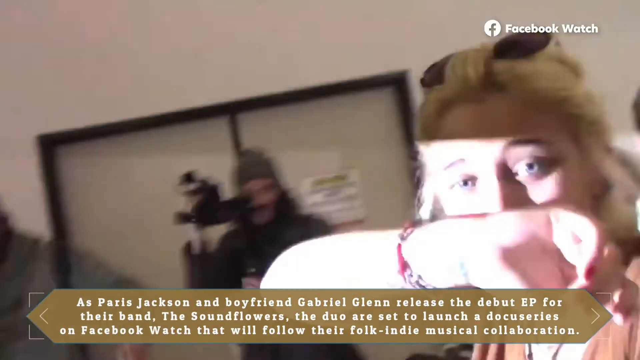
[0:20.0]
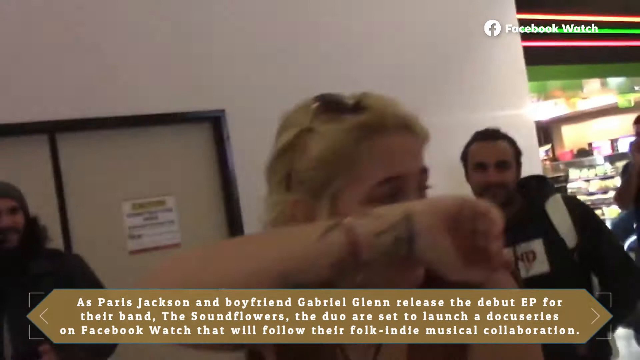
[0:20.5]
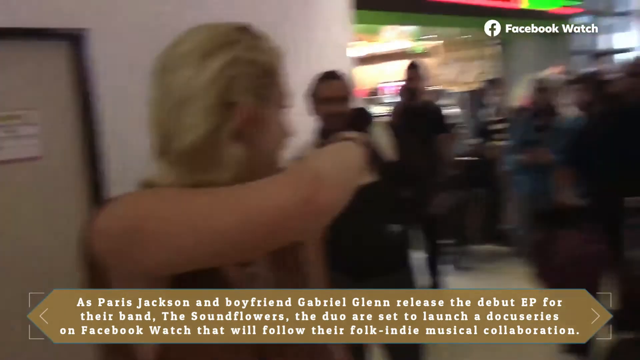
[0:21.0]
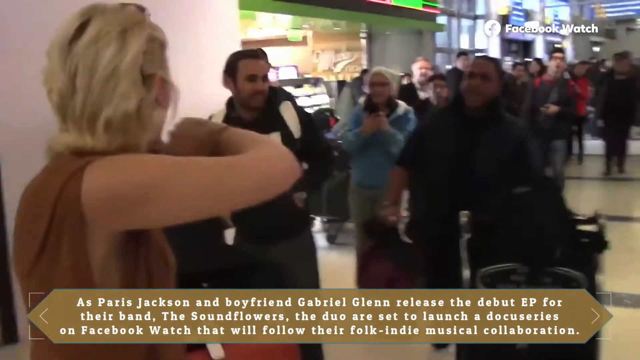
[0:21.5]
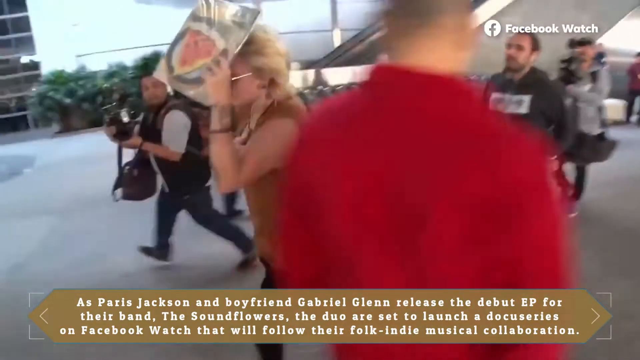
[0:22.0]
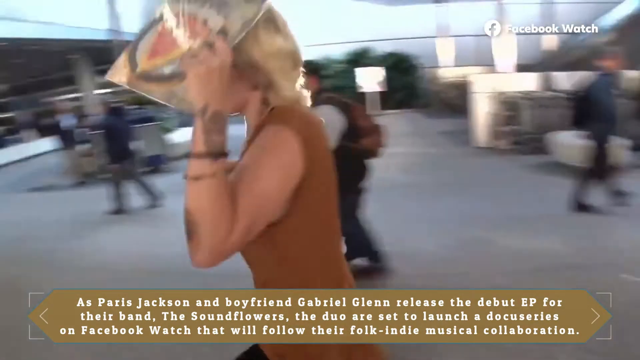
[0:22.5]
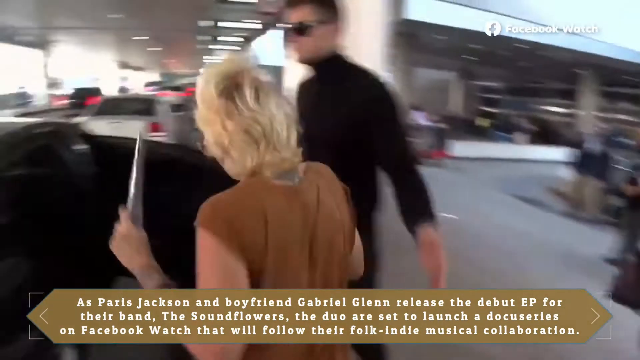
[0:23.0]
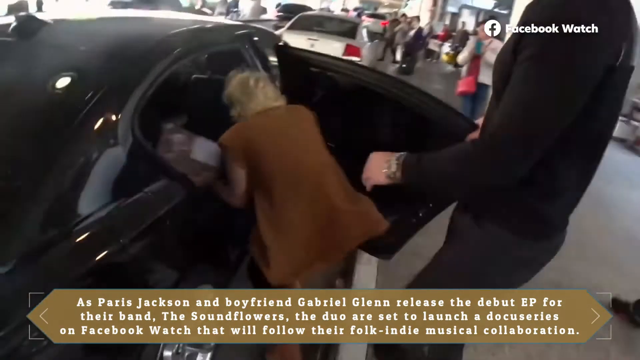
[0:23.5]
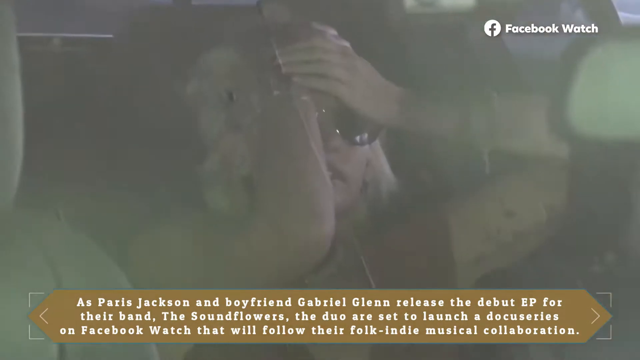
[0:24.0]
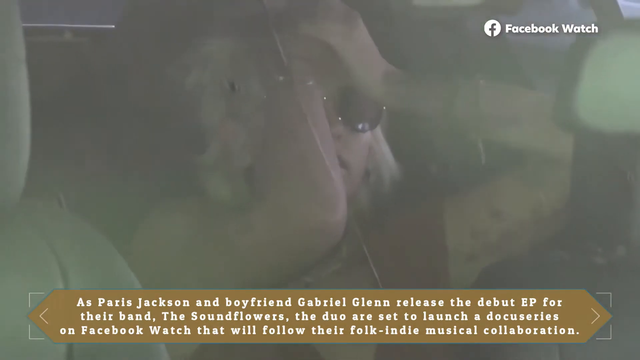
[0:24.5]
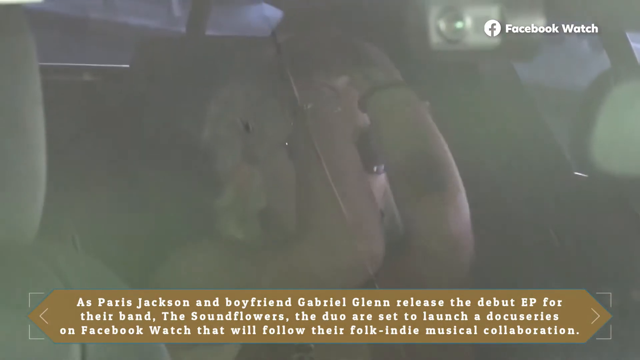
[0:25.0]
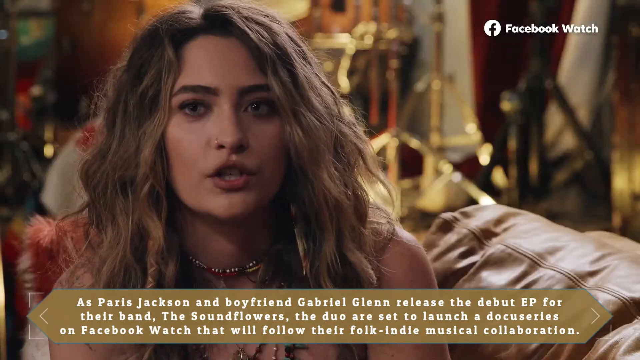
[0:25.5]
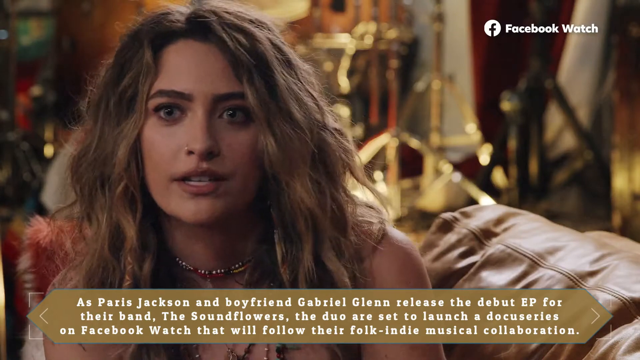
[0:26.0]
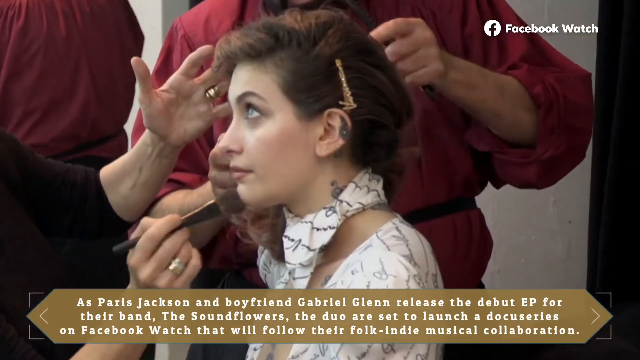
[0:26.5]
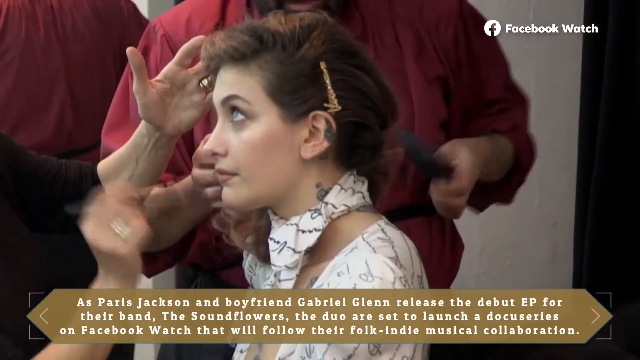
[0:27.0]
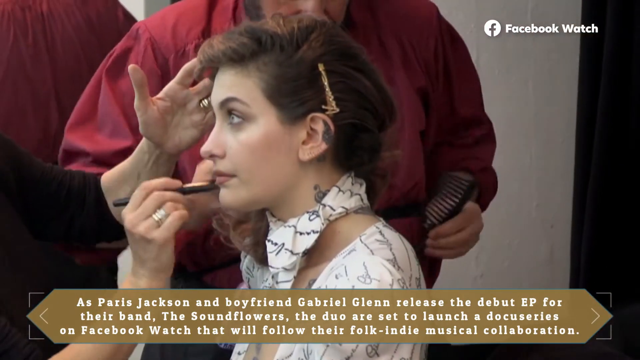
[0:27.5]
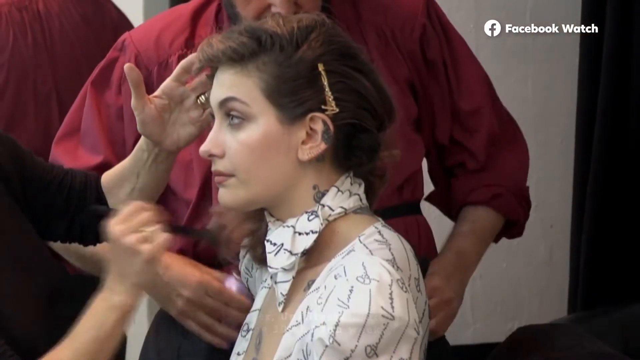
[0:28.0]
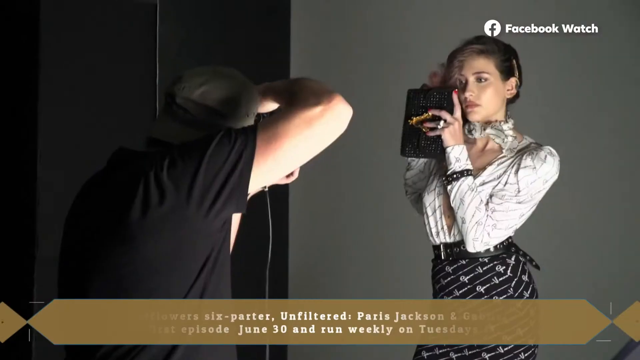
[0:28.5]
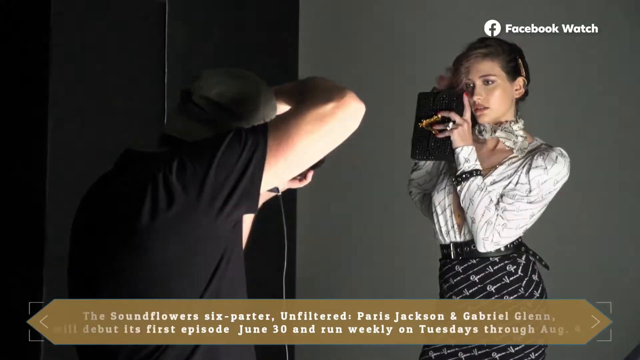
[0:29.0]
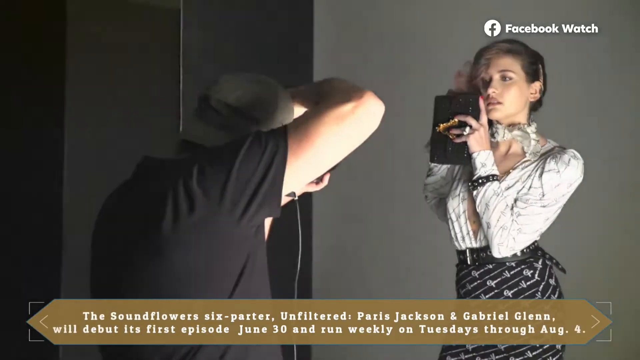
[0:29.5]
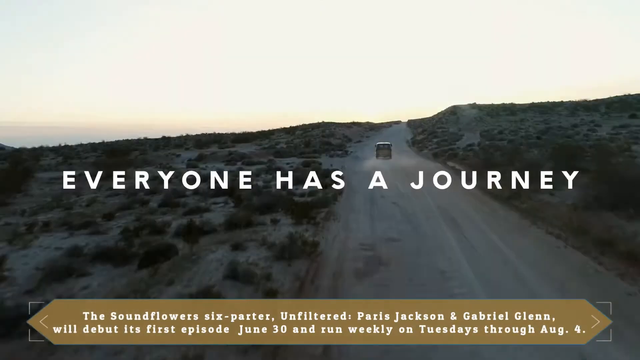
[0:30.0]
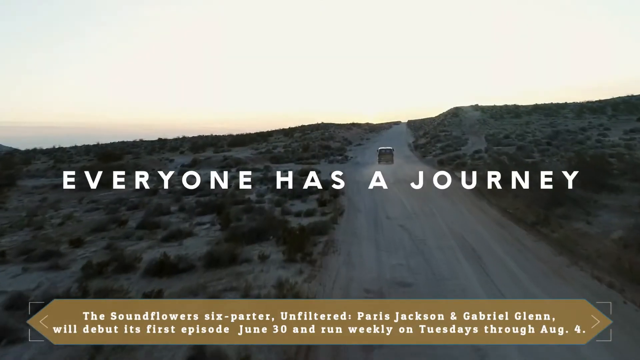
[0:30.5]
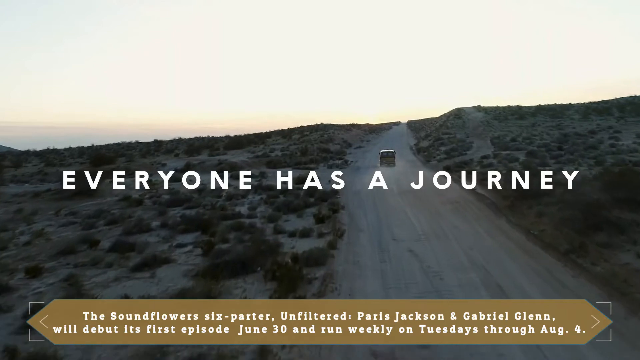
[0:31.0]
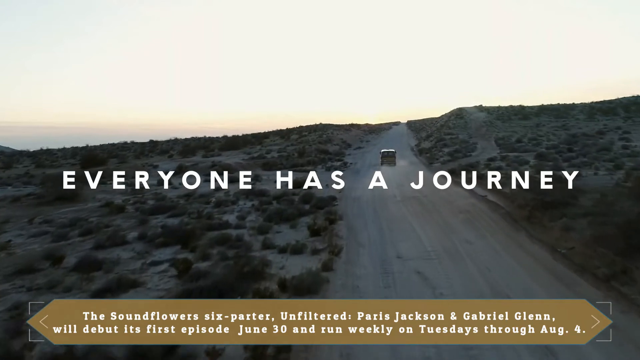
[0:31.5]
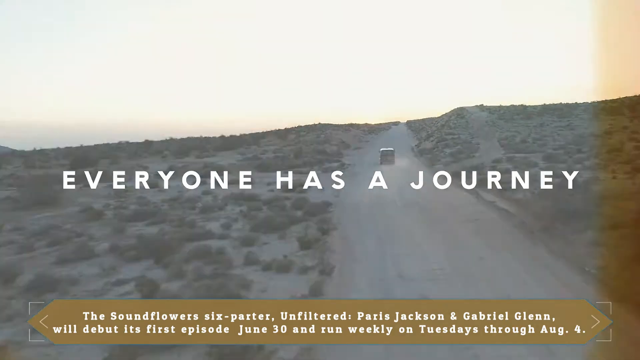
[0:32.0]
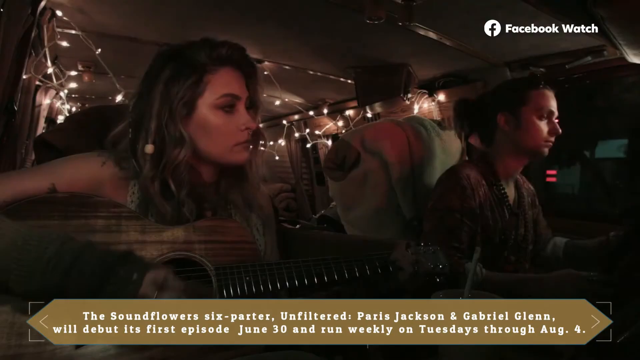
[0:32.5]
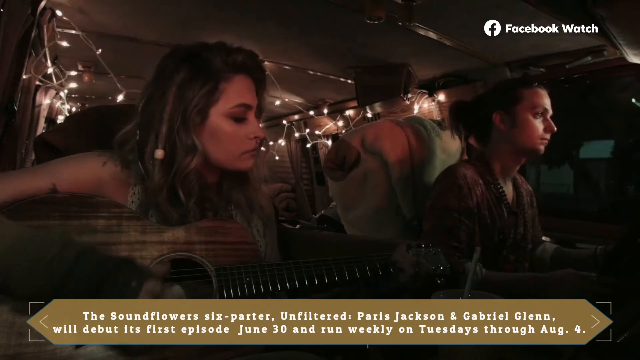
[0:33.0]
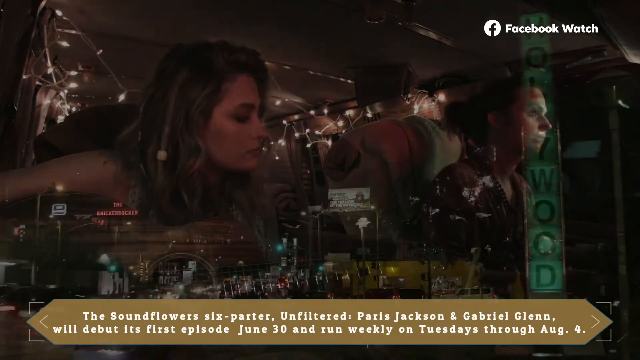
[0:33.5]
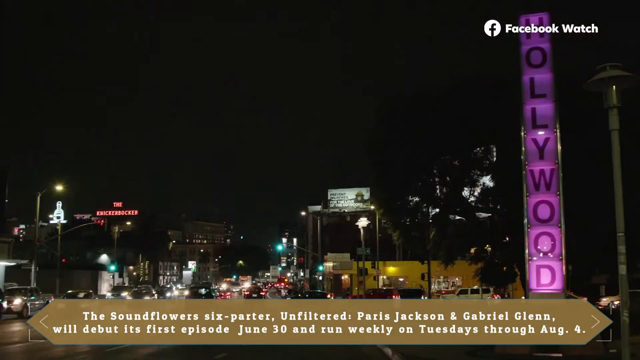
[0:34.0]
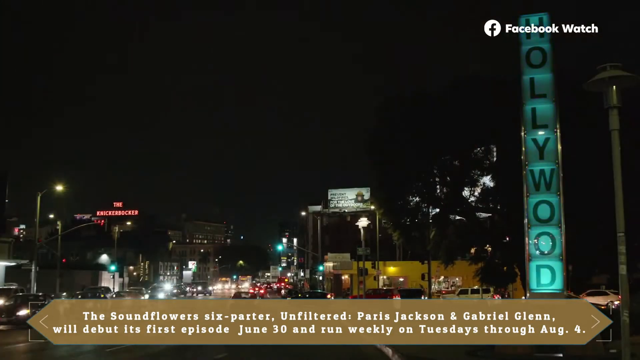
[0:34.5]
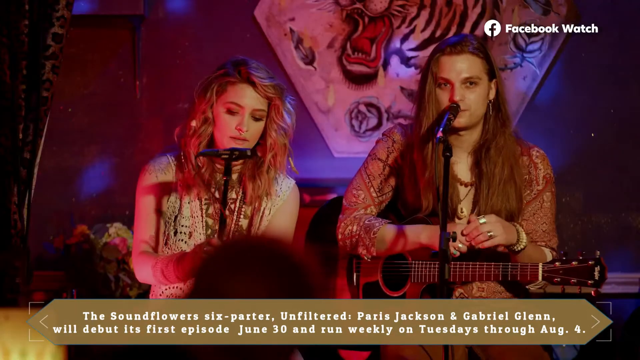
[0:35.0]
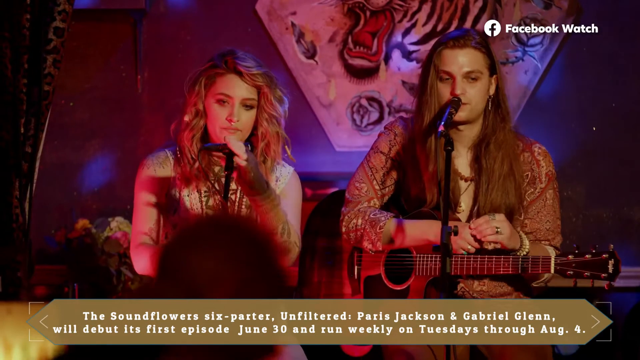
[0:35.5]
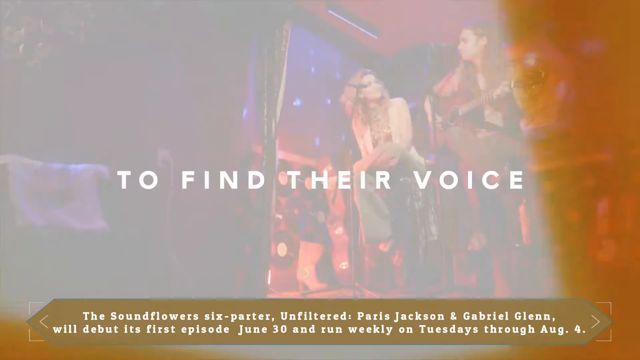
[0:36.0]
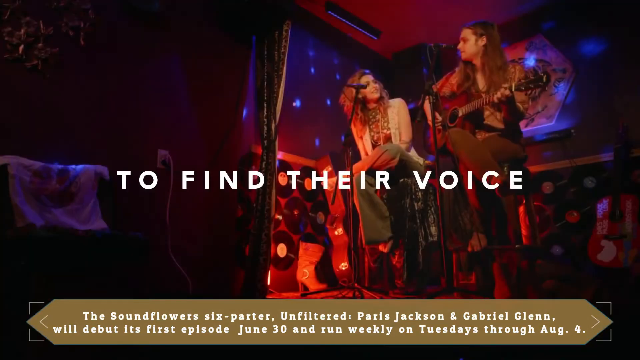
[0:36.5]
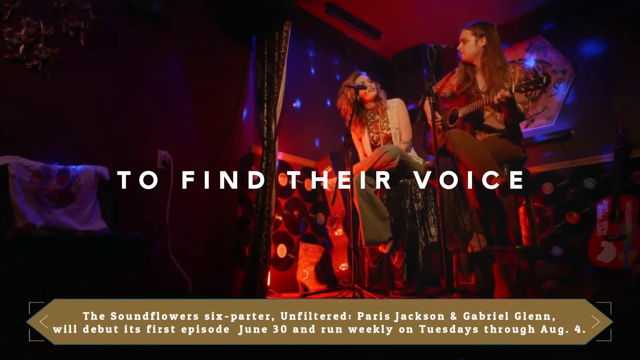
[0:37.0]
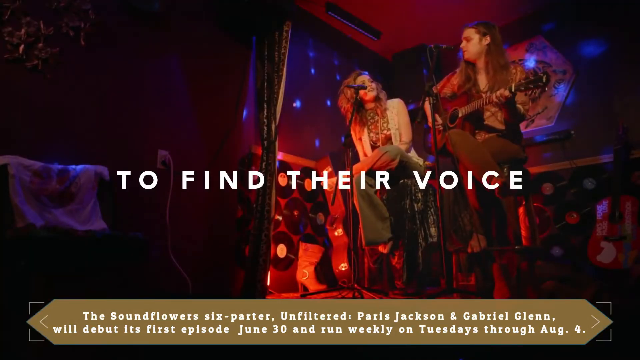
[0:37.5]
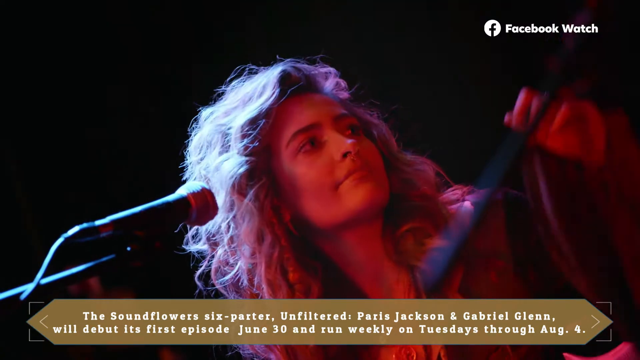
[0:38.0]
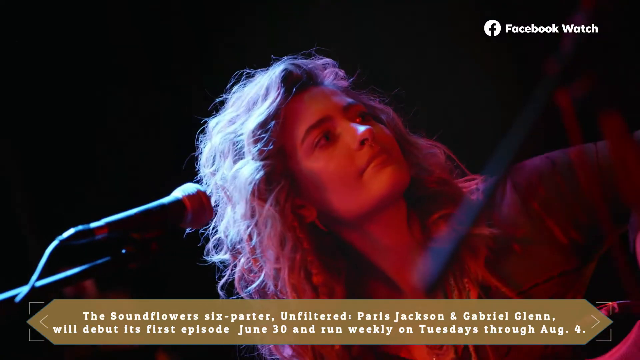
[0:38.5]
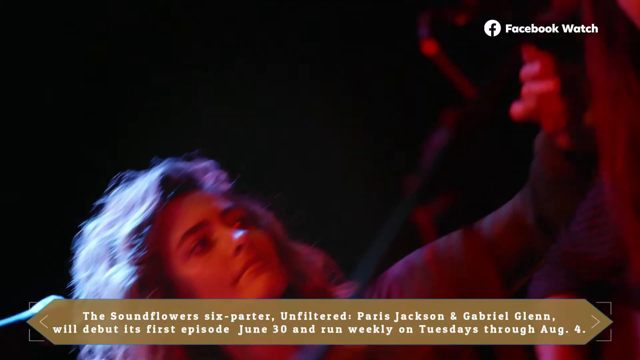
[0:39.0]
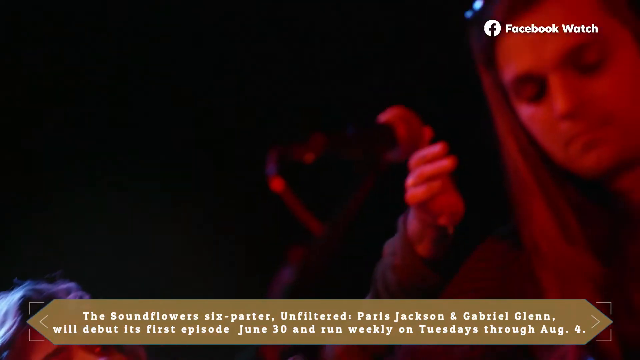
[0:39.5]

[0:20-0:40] "Facebook Watch" appears in the upper right-hand corner. At the bottom, white text reads "Paris Jackson and boyfriend Gabriel Glenn released a debut EP for their band, which is called The Soundflowers. The duo are set to launch a docu-series on Facebook Watch that will follow their folk indie musical collaboration." She is shown talking, having makeup put on, and running to a car, trying to get away from paparazzi. Text says the series "will debut its first episode June 30th and run weekly on Tuesdays through August 4th." The two of them perform together, and she appears to play at least the guitar. Text reads "everyone has a journey to find their voice."